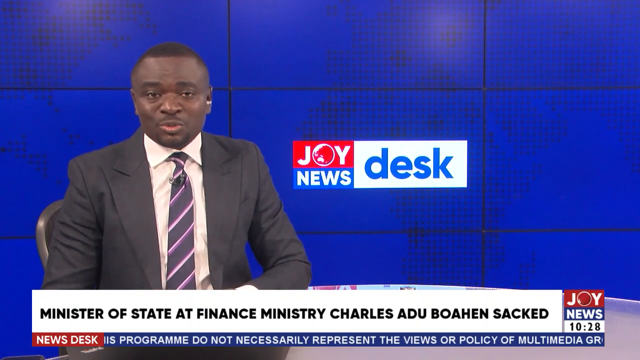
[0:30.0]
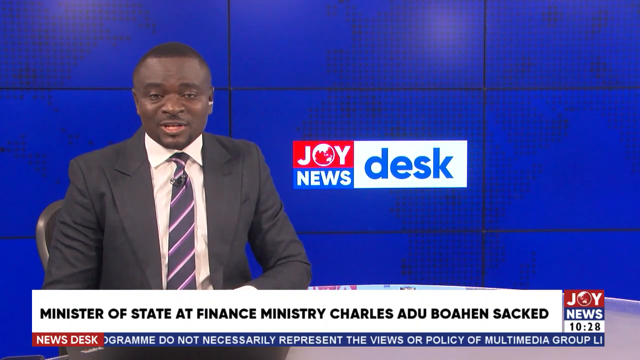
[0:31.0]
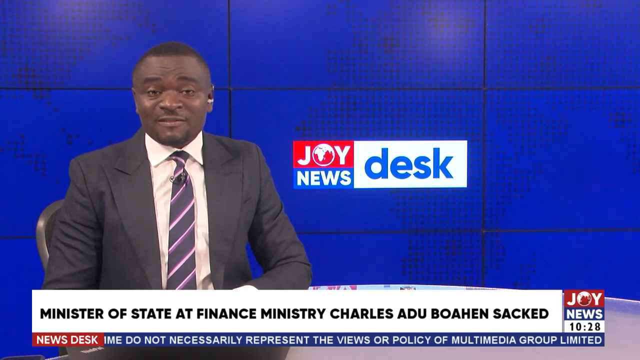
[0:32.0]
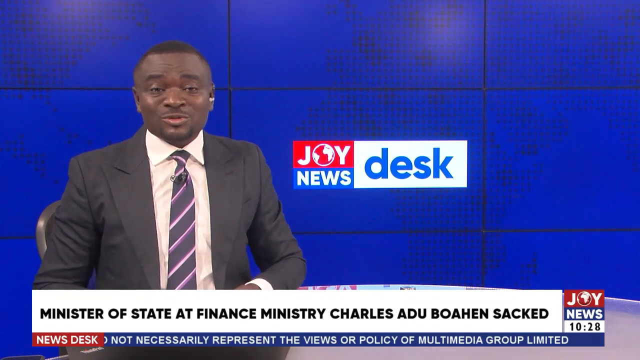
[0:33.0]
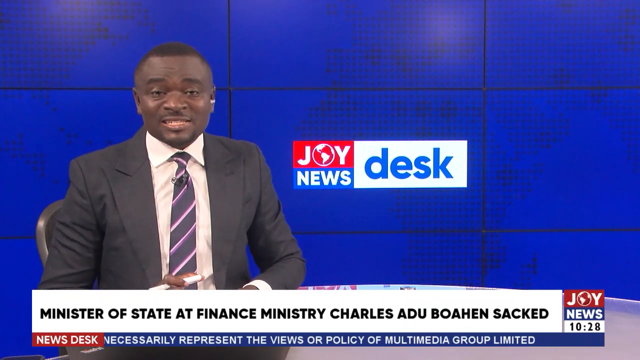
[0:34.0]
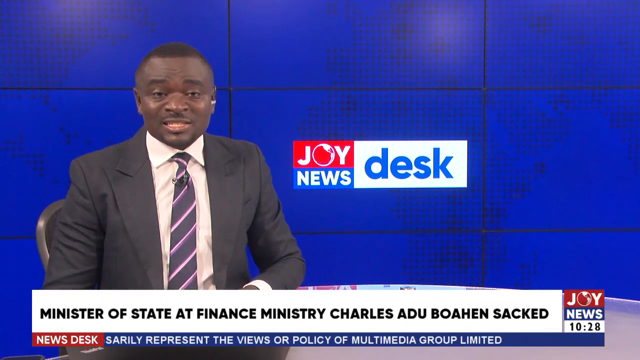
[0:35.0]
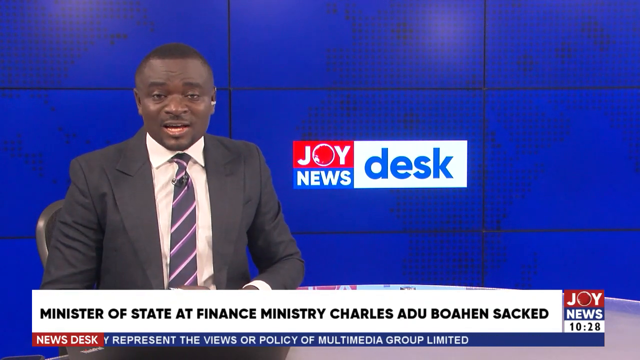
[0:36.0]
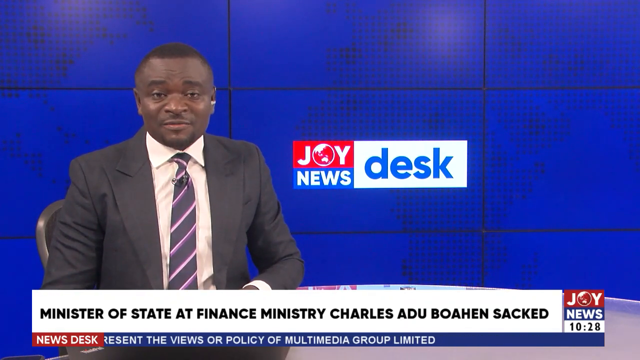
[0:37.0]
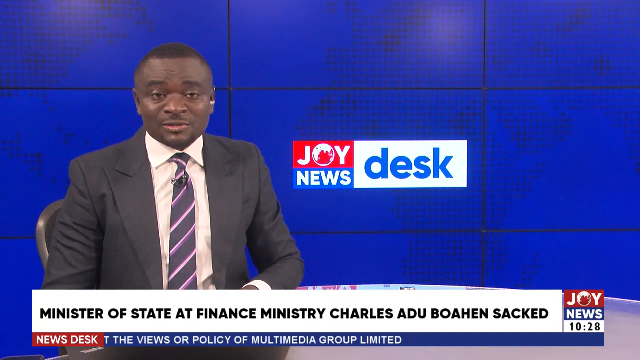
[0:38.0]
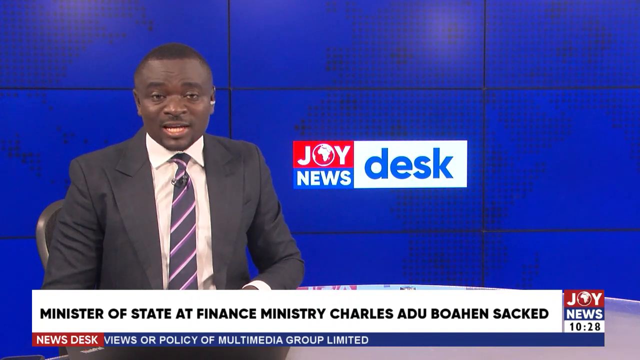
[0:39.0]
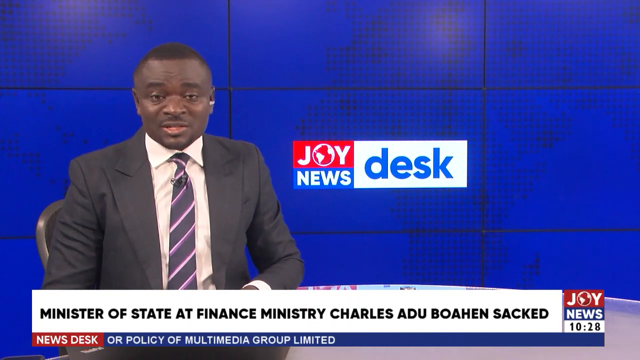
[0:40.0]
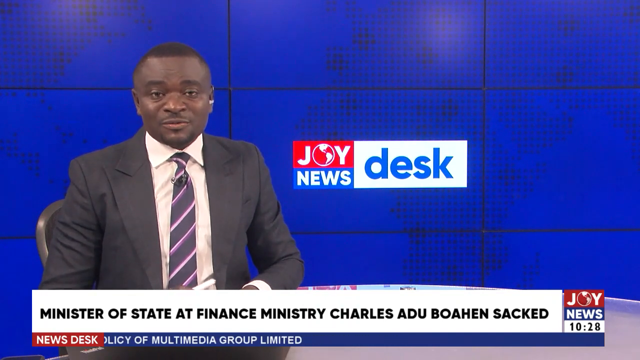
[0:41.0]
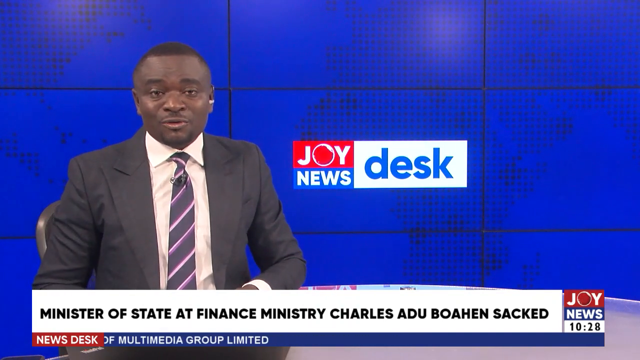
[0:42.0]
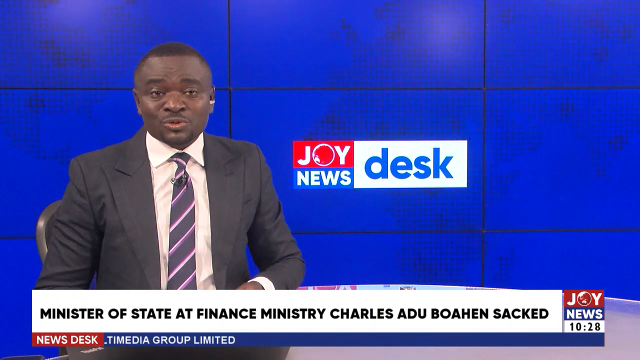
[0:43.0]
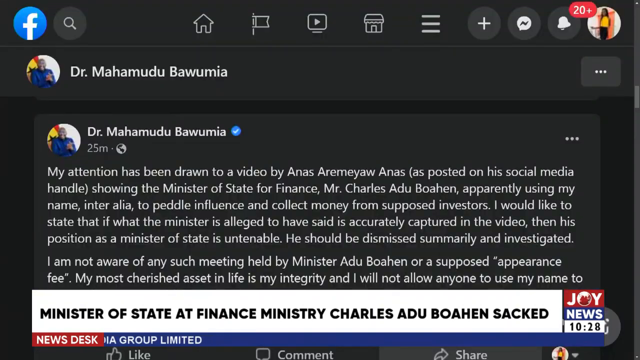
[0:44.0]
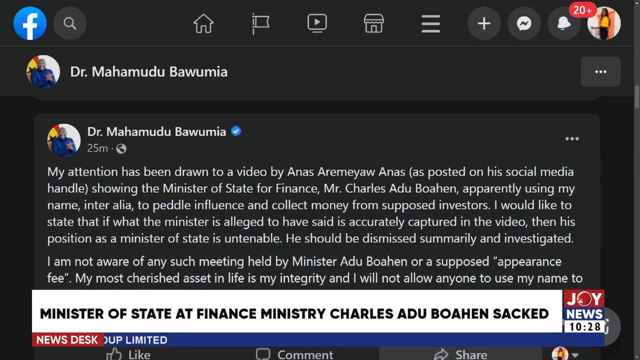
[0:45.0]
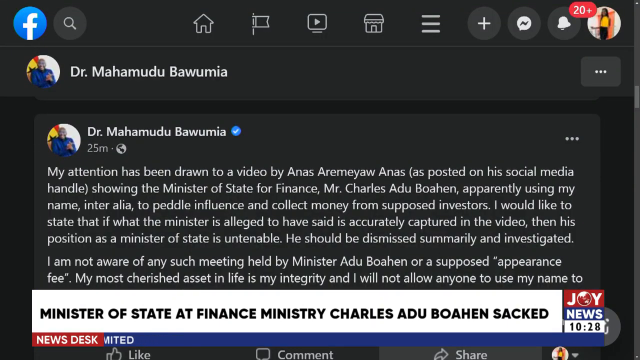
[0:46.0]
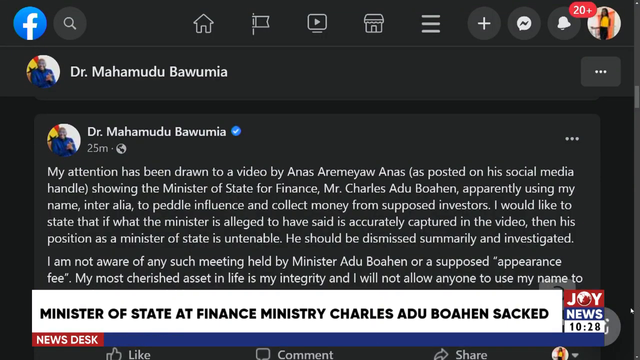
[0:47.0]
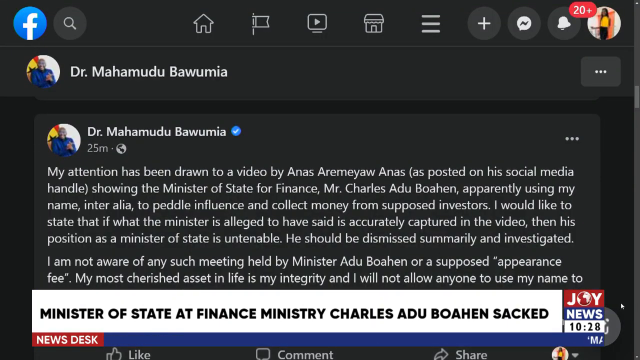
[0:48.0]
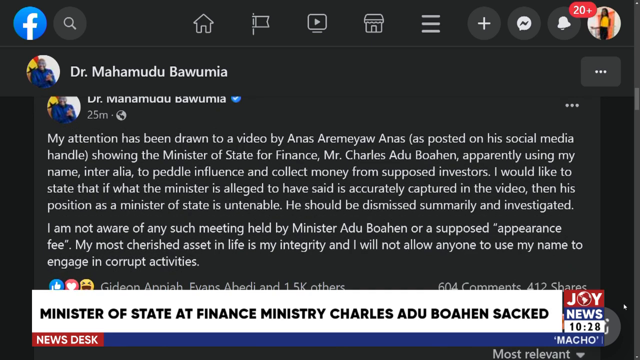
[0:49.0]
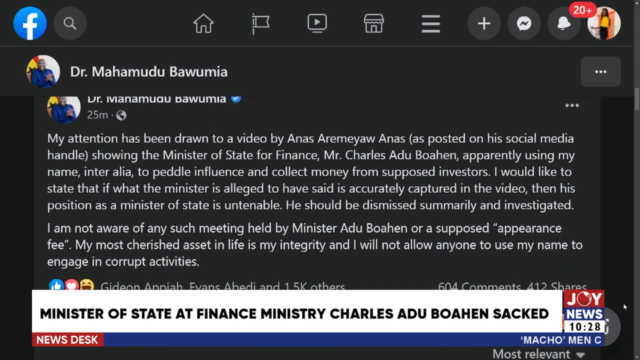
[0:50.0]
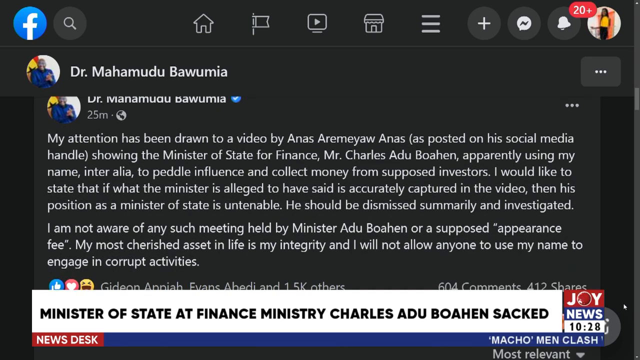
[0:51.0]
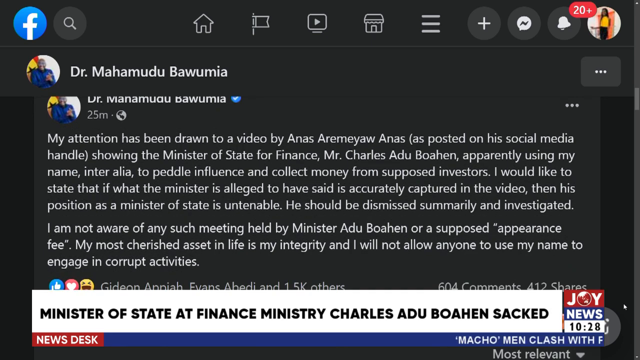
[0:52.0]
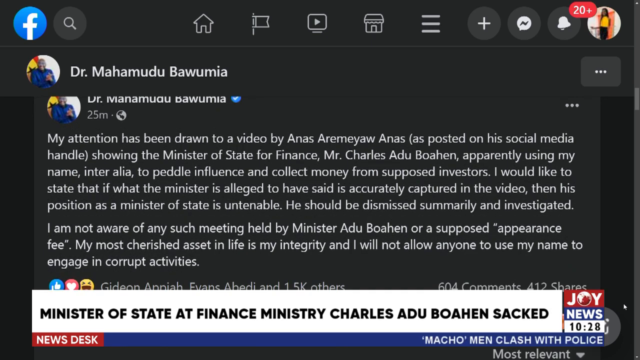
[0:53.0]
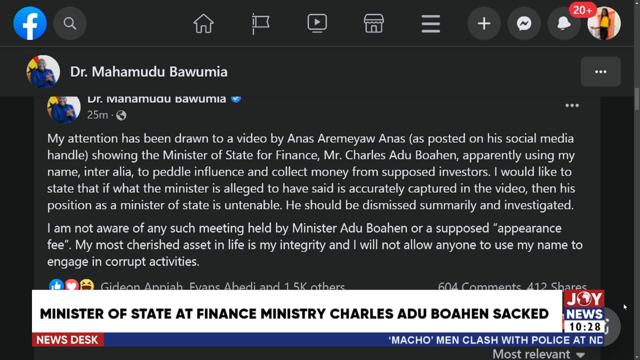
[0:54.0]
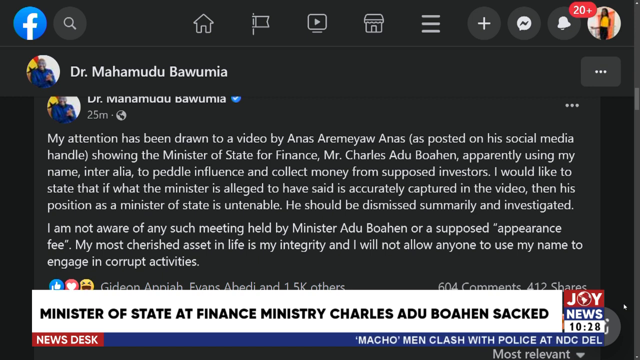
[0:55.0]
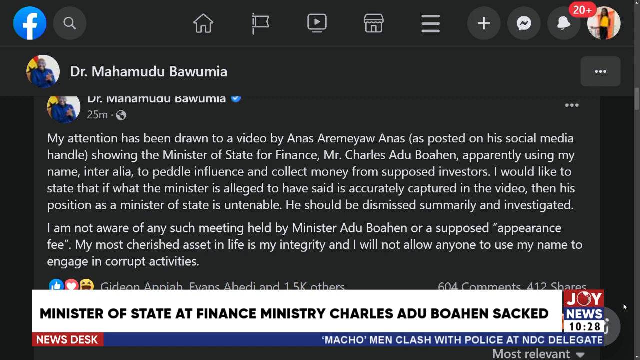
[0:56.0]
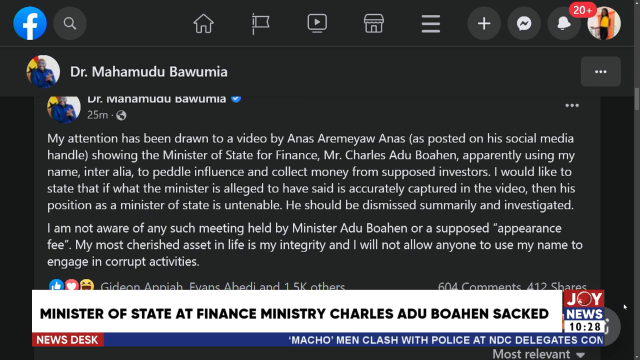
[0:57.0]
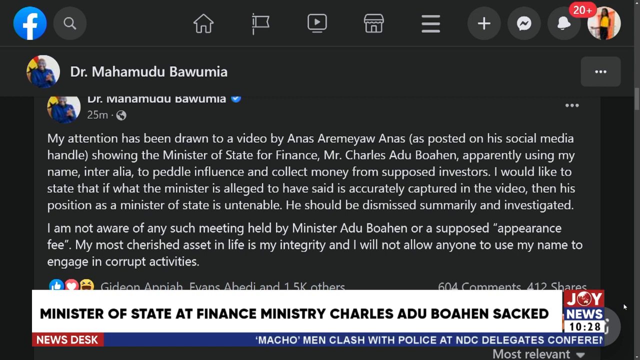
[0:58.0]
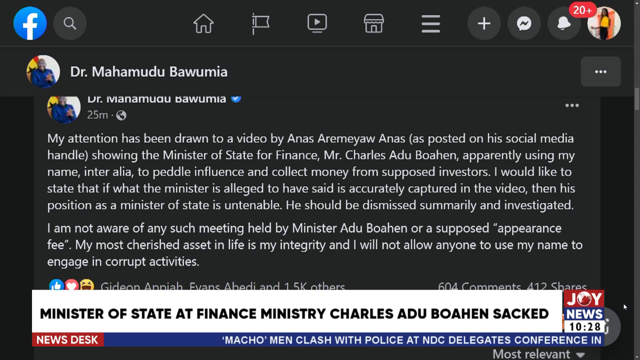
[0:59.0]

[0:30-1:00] The same newscaster continues in front of his blue screen. The headline still reads "Minister of State at Finance Ministry, Charles Abdu-Boahen sacked," the Joy News emblem is in the far right-hand corner, and the time reads 10:28. The broadcast then switches to an image of a letter or email protesting the firing, sent by Dr. Mohamudu Bawumia. It reads: "My attention has been drawn to a video by Anas Aremeyaw, as posted on his social media handle, showing the Minister of State for Finance, Mr. Charles Abdu-Boahen, apparently using my name, inter alia, to peddle influence and collect money from supposed investors. I would like to state that if what the minister is alleged to have said is accurately captured in the video, then his position as a Minister of State is untenable. He should be dismissed summarily and investigated."